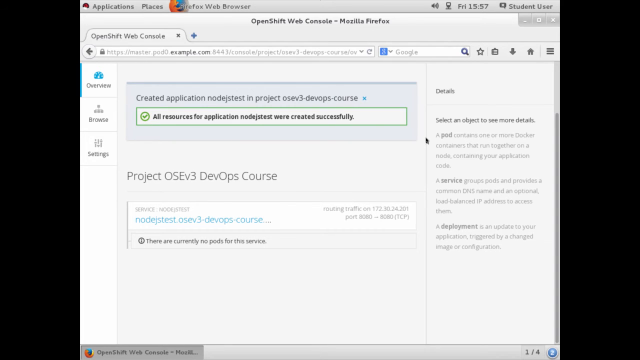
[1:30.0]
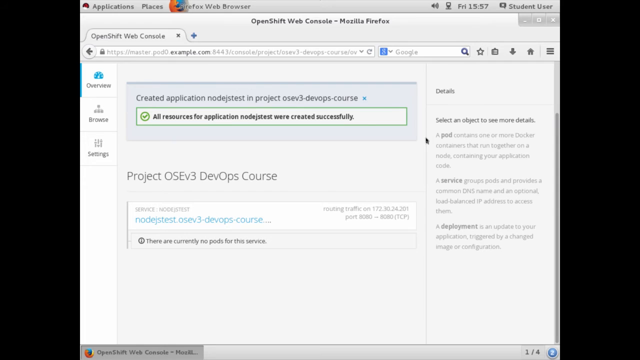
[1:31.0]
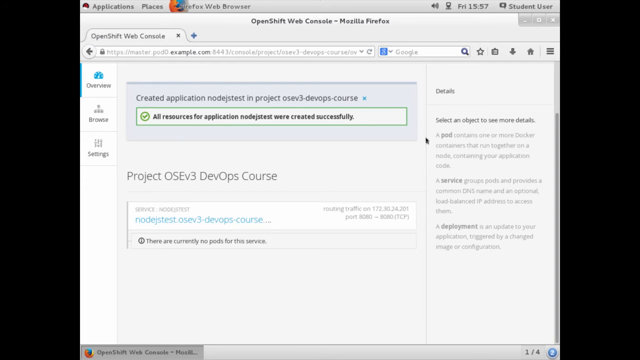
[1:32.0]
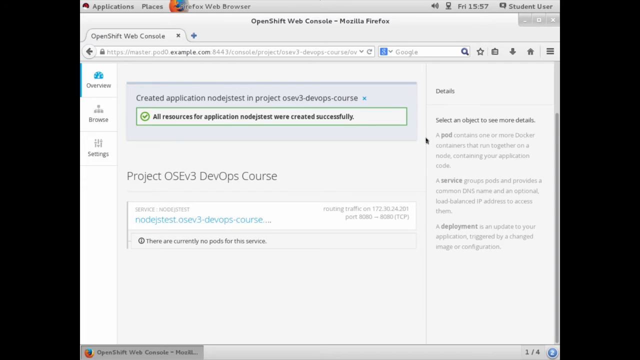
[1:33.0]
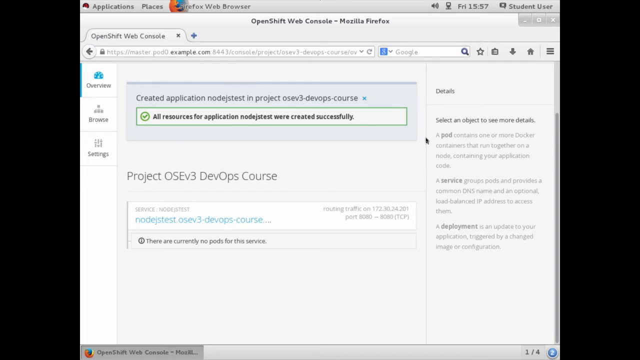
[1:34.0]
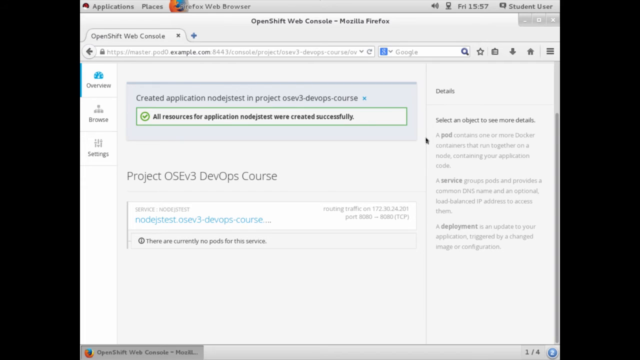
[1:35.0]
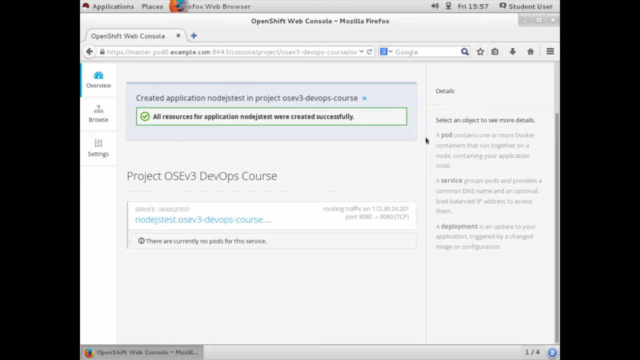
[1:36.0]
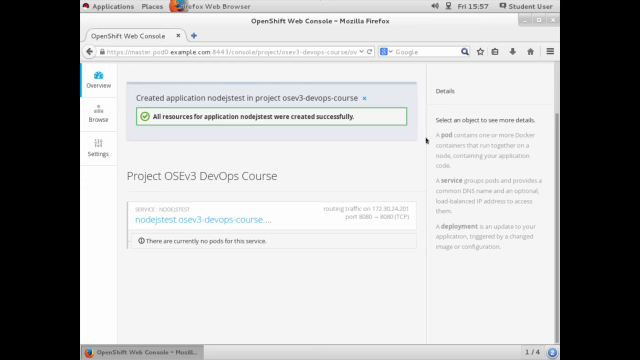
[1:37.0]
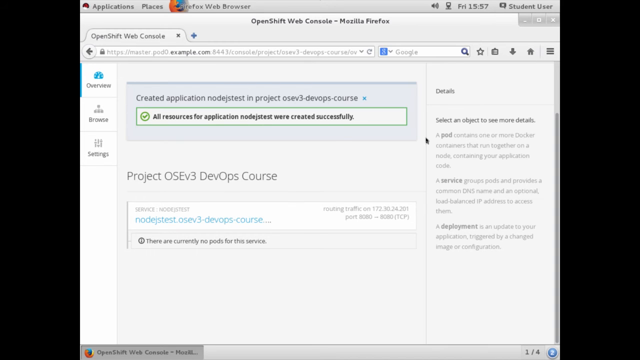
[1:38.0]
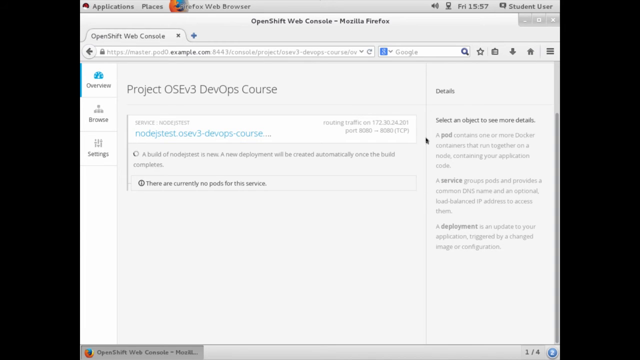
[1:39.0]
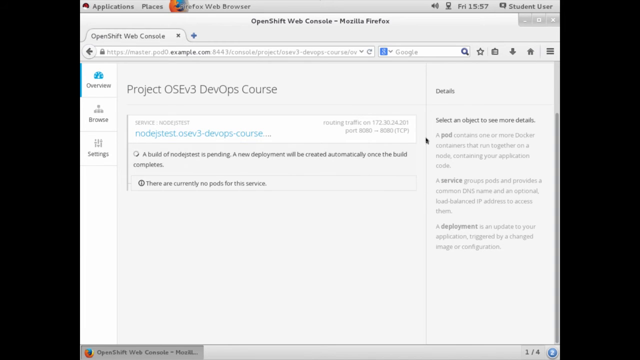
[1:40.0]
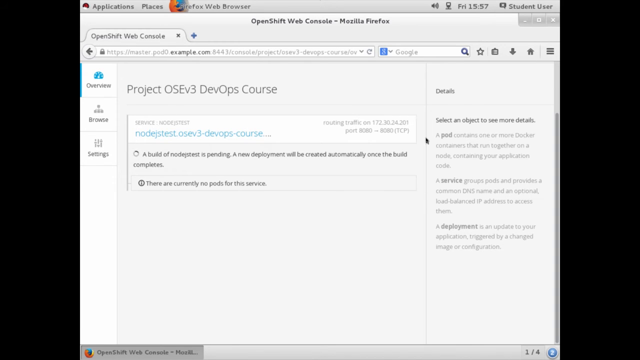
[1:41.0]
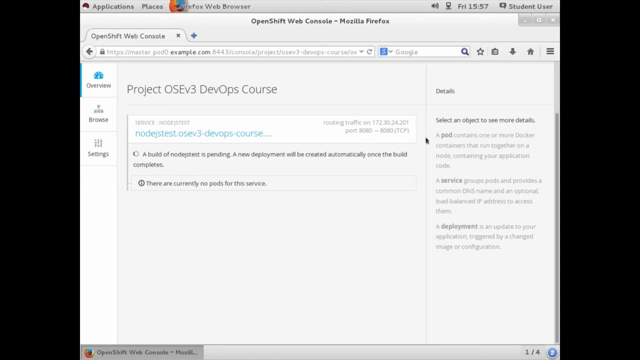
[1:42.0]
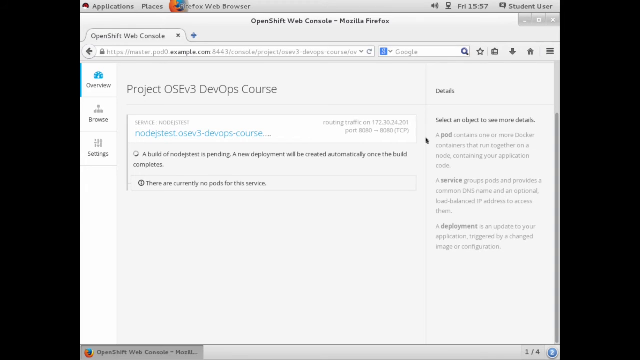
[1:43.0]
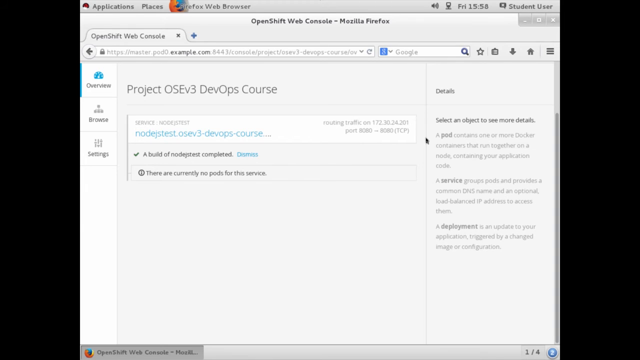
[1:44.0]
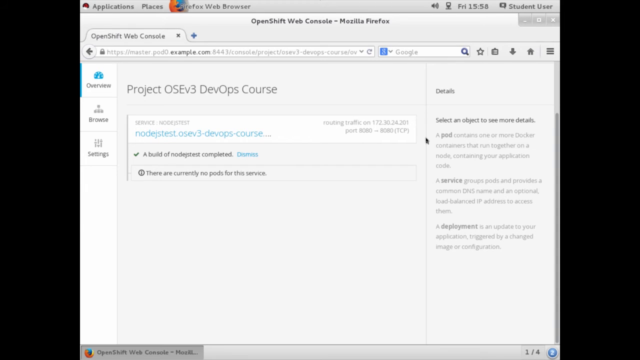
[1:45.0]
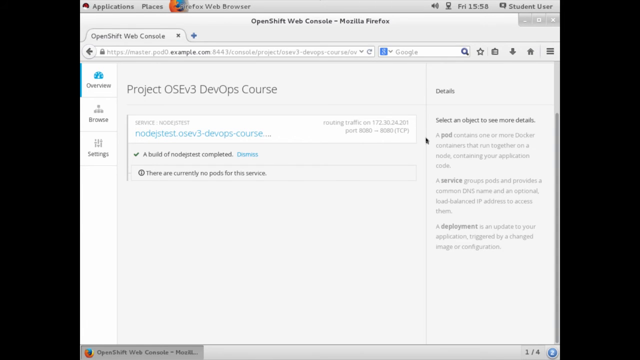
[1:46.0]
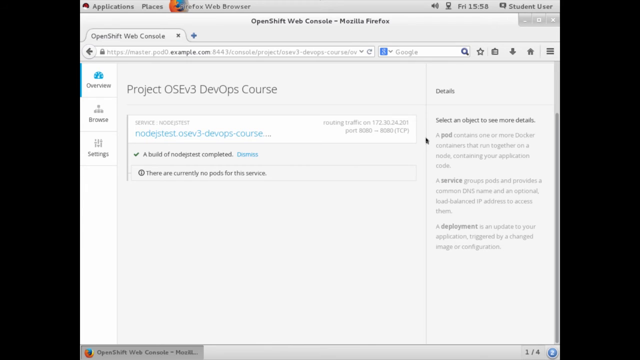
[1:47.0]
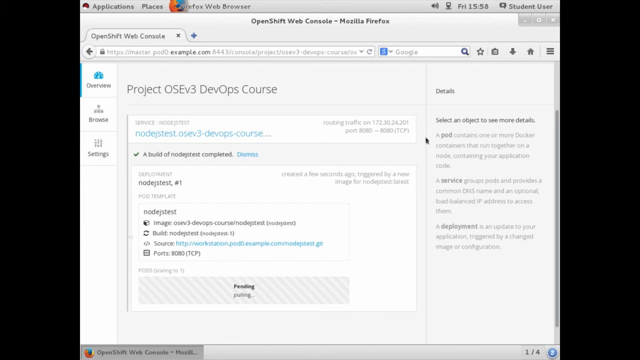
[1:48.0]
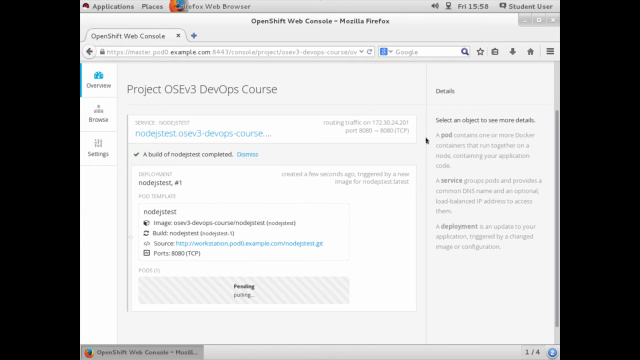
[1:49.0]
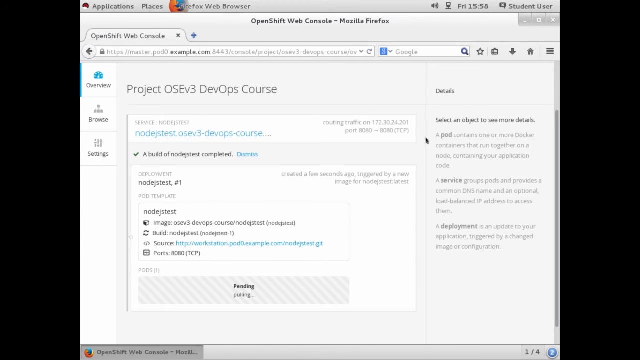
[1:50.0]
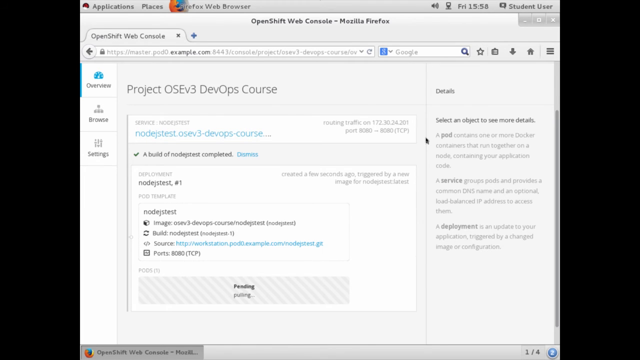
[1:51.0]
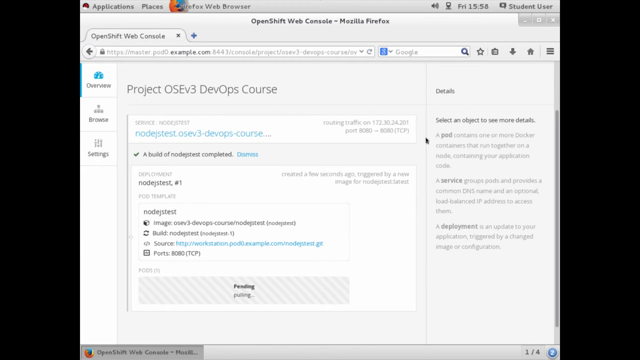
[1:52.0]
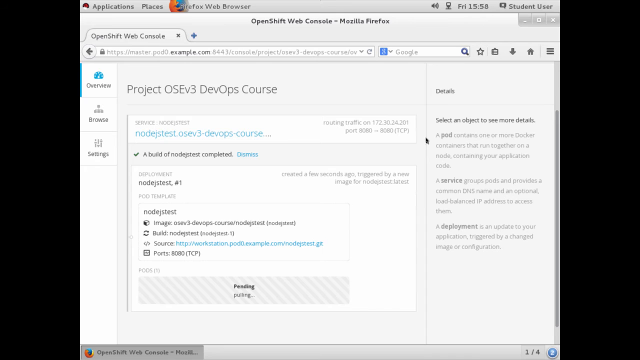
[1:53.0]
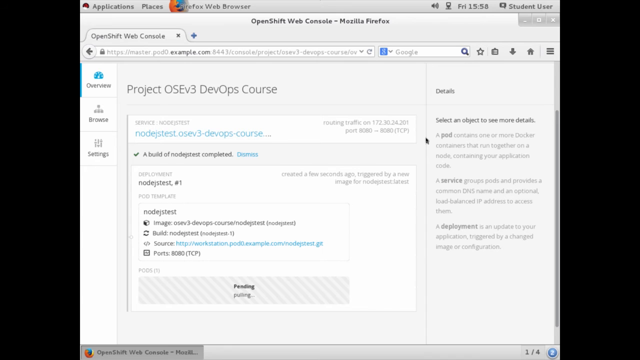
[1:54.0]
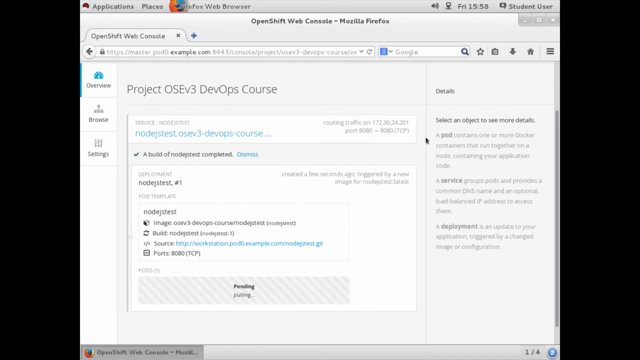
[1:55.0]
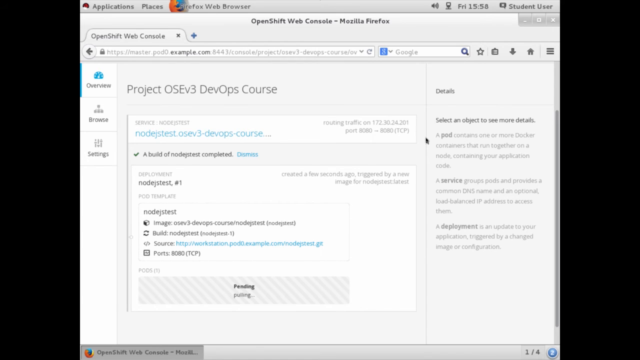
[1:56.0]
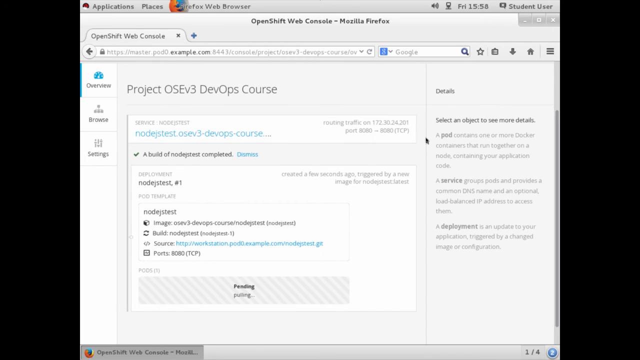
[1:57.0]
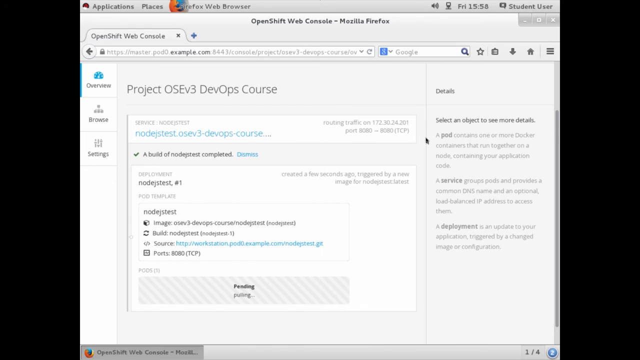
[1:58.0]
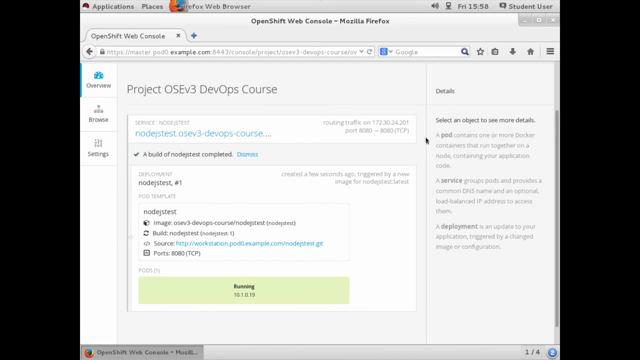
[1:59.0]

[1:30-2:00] The screen recording shows a web page labeled "OpenShift Web Console" in the Firefox web browser. A section at the top reads "Created Application Node.js Test" and "Project OSEv3-DevOps-Course". Underneath is a white rectangle with a green border that reads "All Resources for Application Node.js Test were created successfully." On the right side is a column that reads "Detail, select an object to see more details", with further text beginning "A pod".